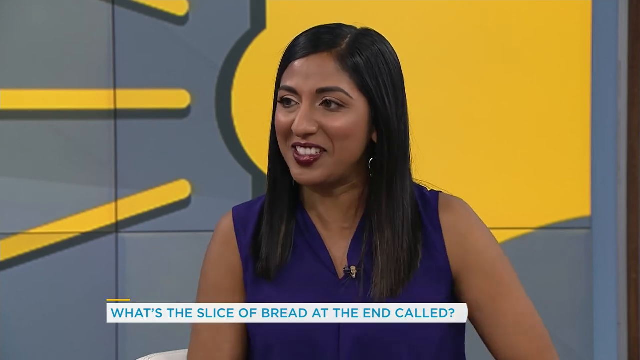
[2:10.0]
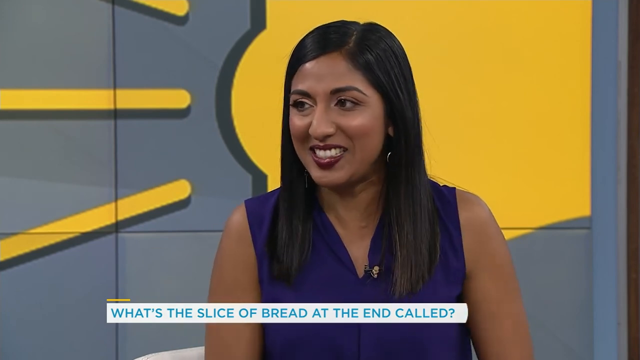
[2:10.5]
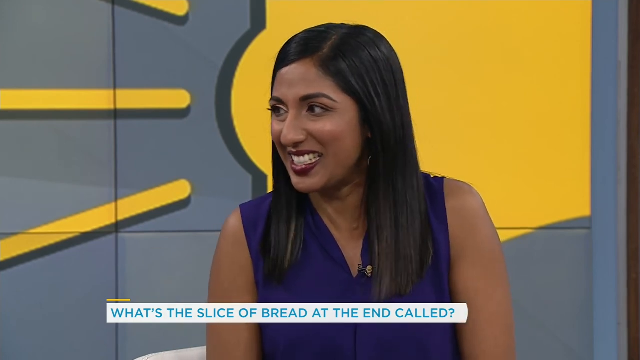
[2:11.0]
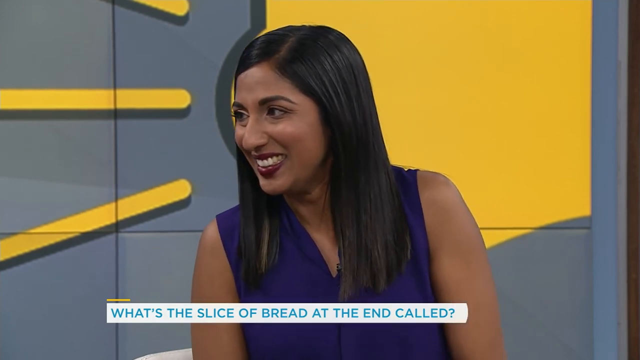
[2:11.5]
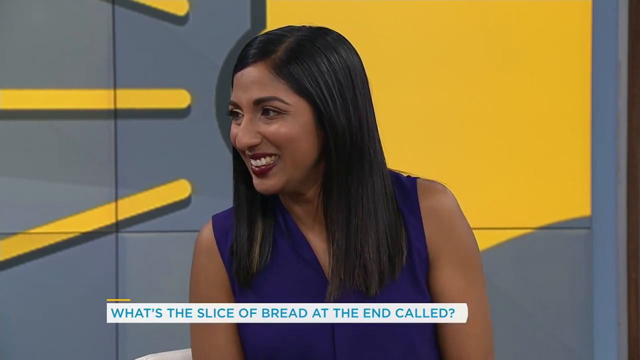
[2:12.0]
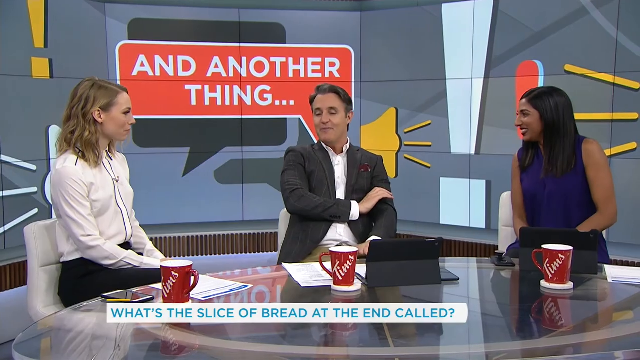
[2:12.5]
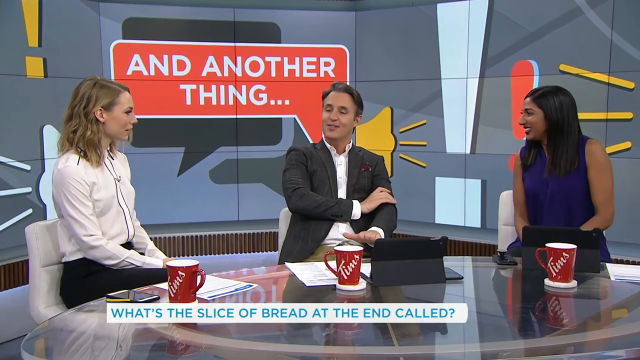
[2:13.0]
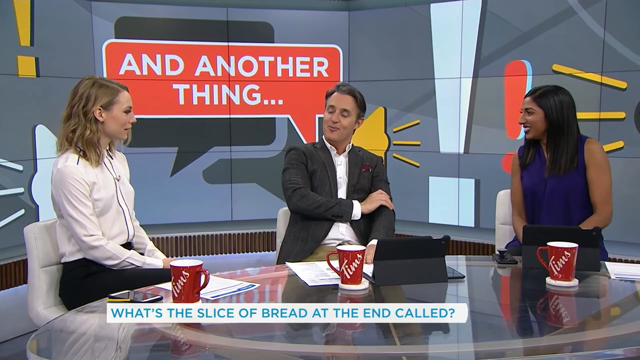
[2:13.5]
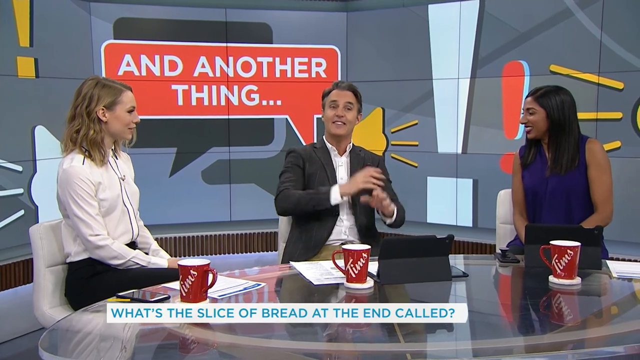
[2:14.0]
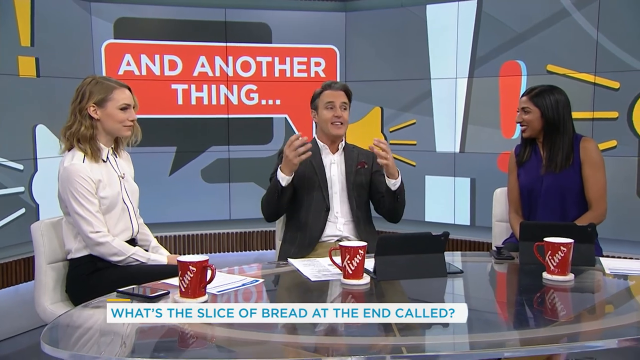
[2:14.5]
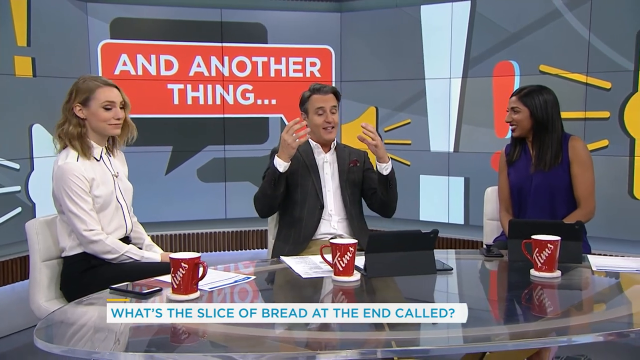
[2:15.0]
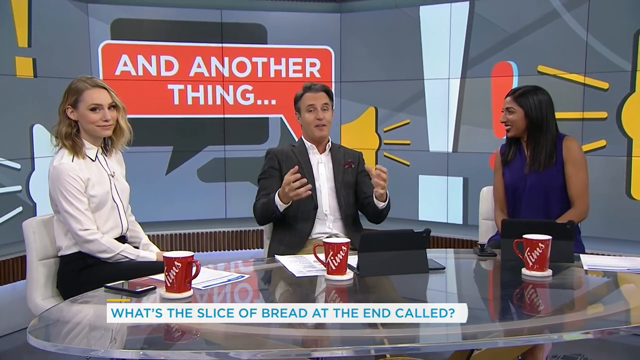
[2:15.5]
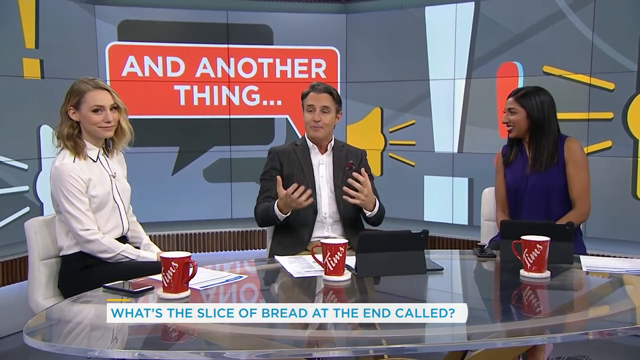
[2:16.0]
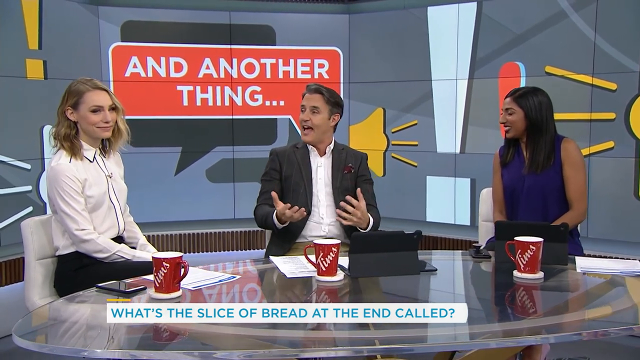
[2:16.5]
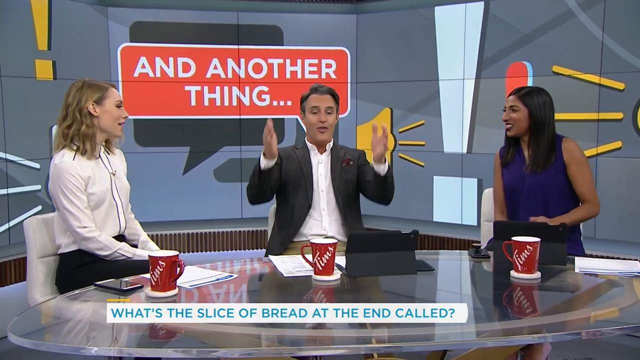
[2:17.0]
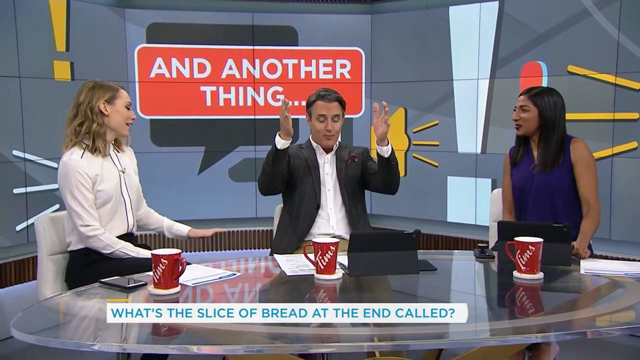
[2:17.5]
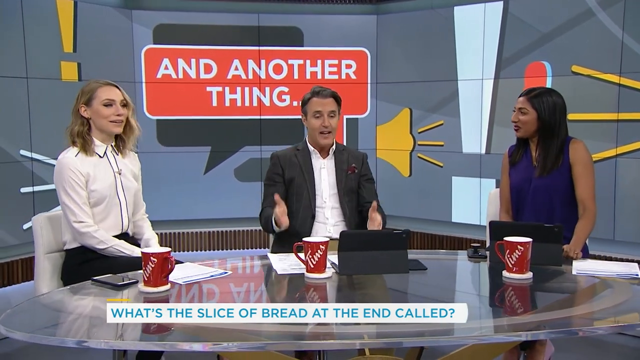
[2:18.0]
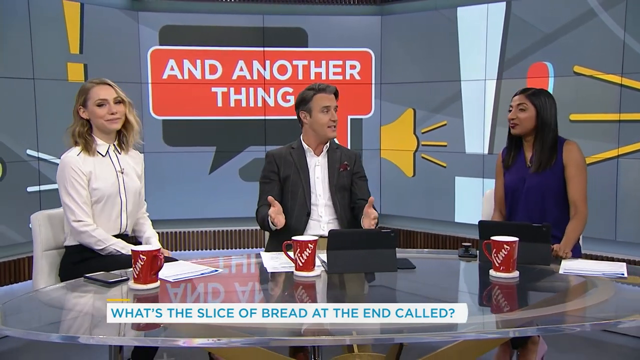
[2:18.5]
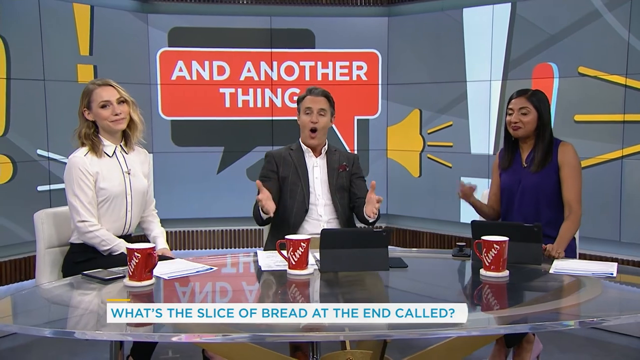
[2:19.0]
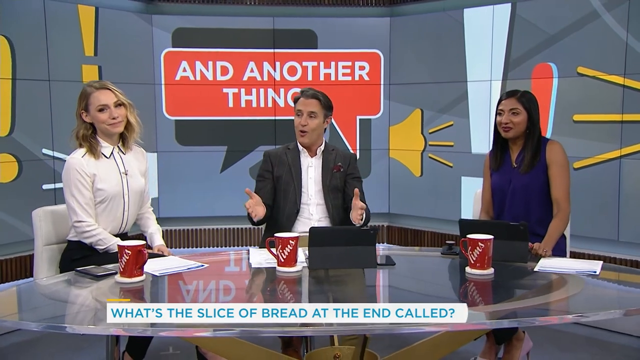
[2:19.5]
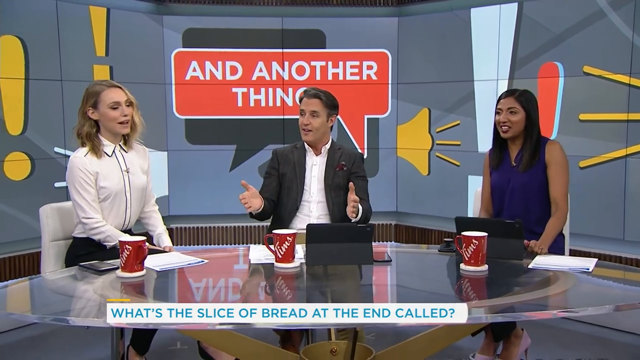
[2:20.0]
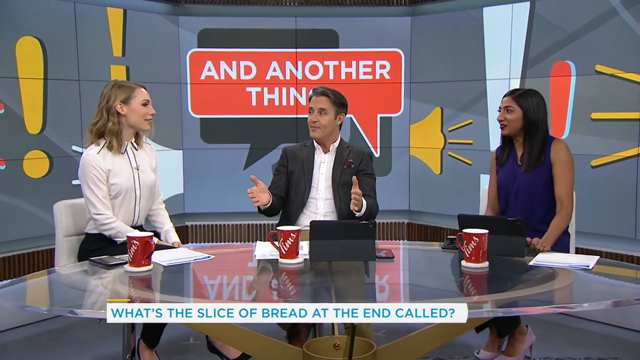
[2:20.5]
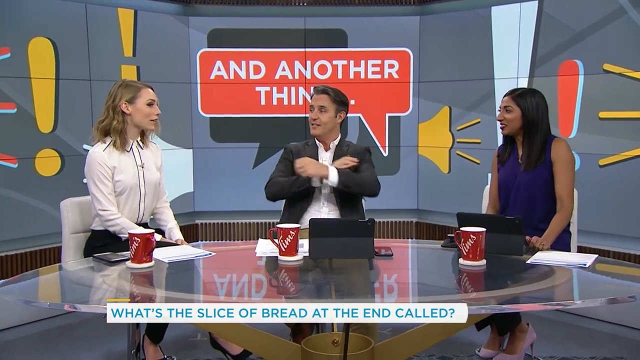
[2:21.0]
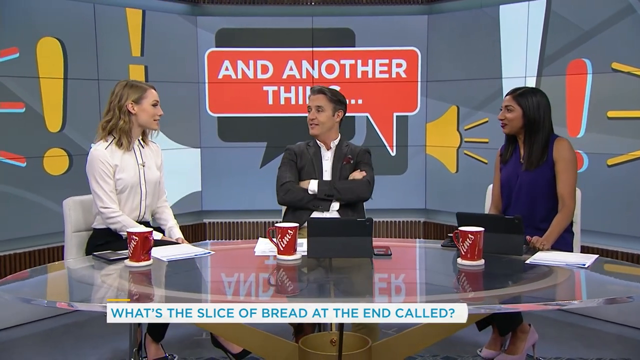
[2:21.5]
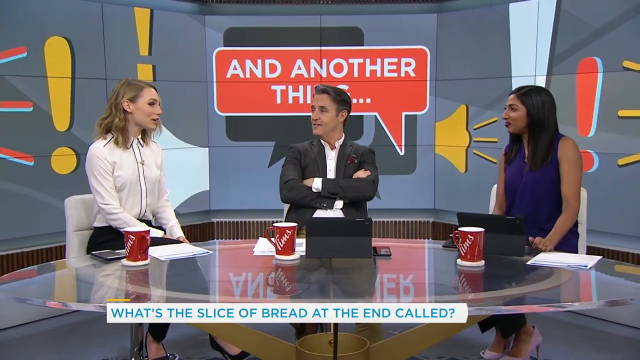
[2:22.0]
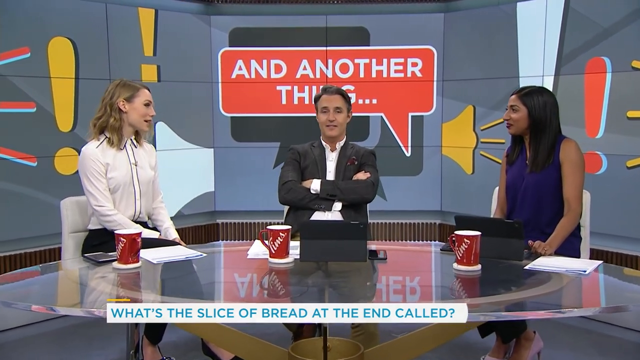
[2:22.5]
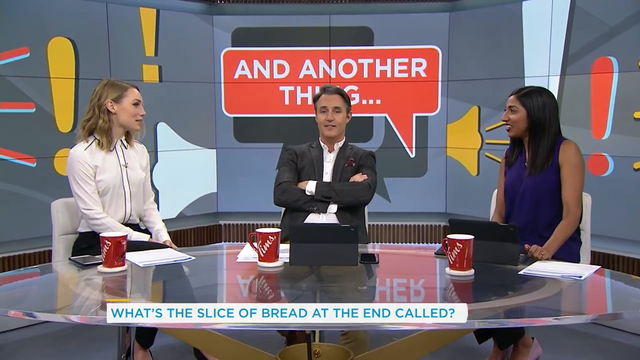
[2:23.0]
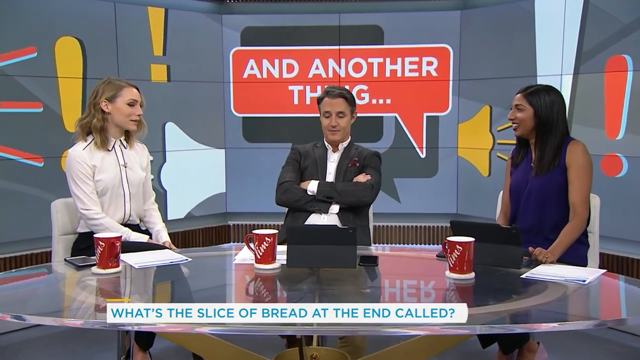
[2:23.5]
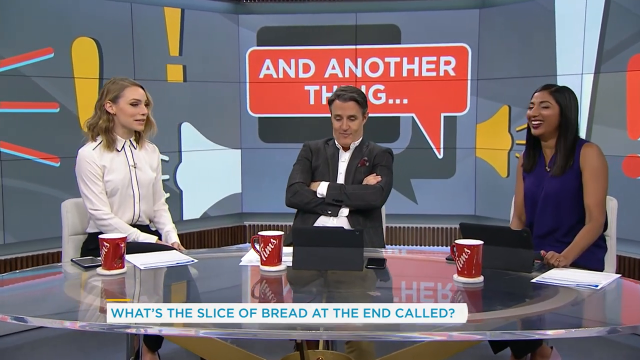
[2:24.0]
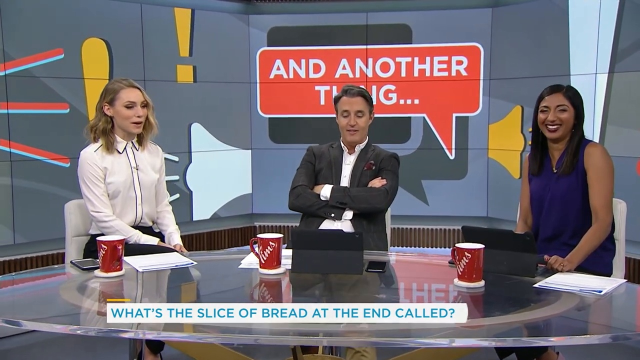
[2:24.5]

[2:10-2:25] The Indian woman, with the sun behind her, tilts toward the man to her right, leaning in and laughing. The man has his right arm over his left sleeve and is turned toward the woman in white. He is dressed casually without a tie but has a handkerchief. He is emphatic, curling his hands up in front of his face. The woman in white turns toward him and back, seeming to want to say something but not doing so while he speaks; she then just looks at the camera. The Indian woman is on the right. The woman on the left speaks to him, her hands over her lap. The Indian woman seems amused by the back-and-forth banter. At the bottom of the TV screen there is a brownish ridge-like feature running up and down. The TV screen is segmented by many black vertical lines, being a monitor made up of a number of monitors that together show the graphic.